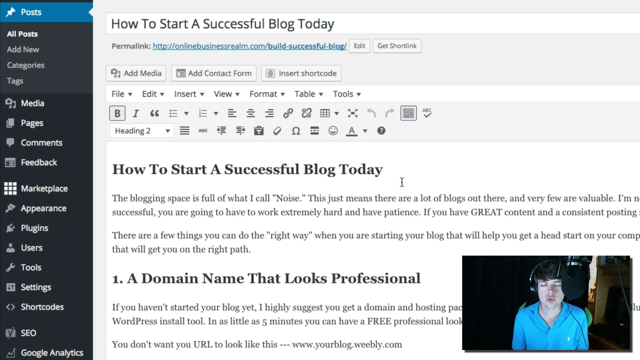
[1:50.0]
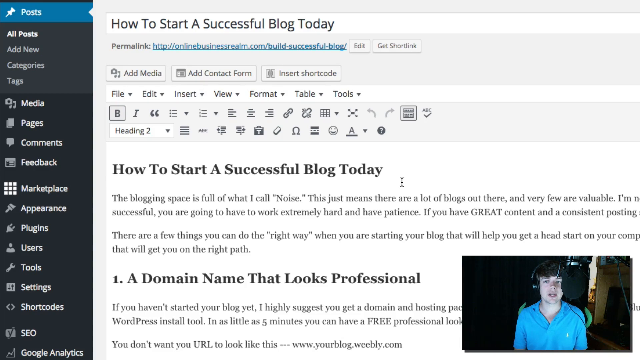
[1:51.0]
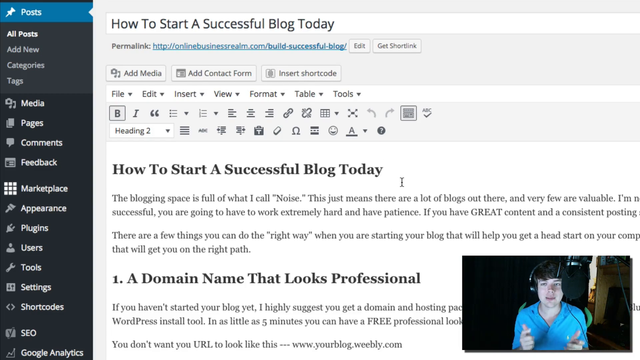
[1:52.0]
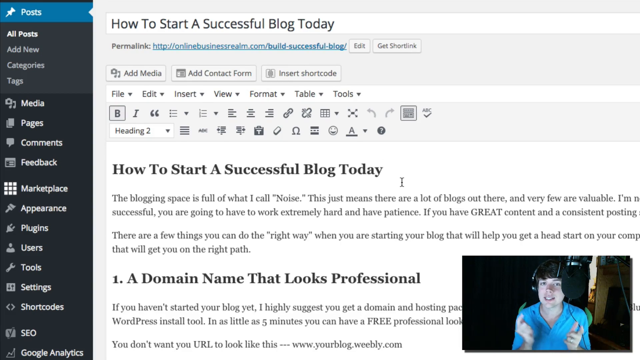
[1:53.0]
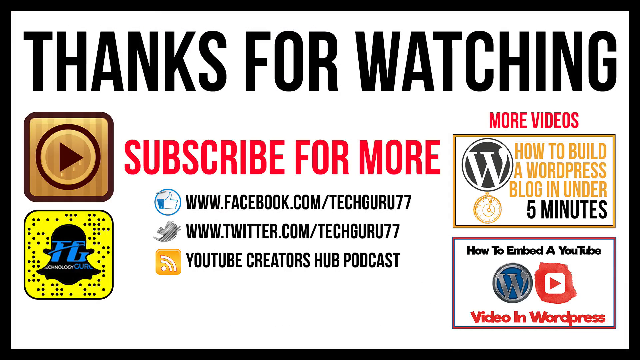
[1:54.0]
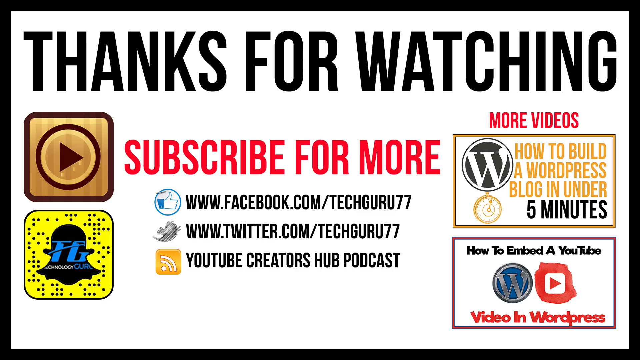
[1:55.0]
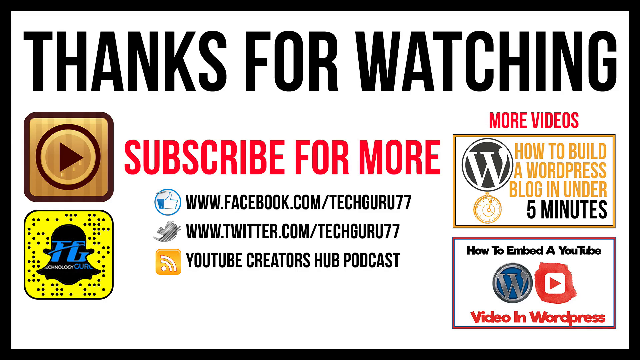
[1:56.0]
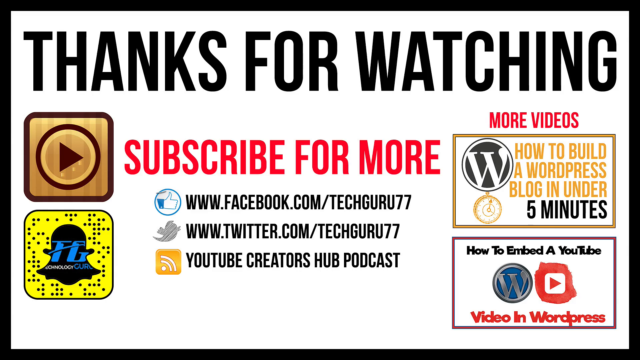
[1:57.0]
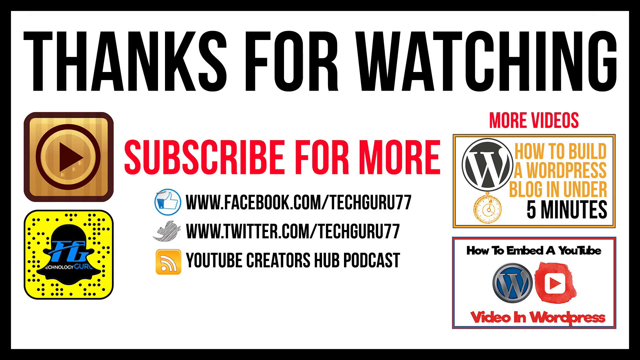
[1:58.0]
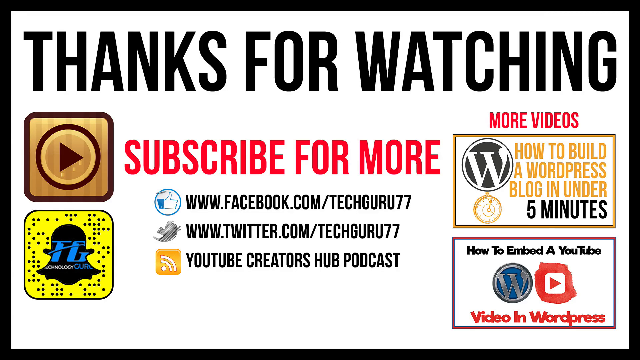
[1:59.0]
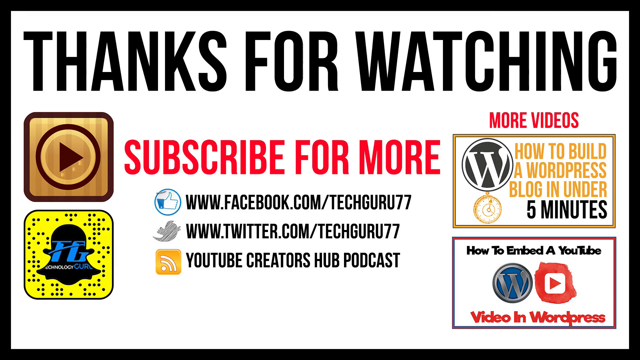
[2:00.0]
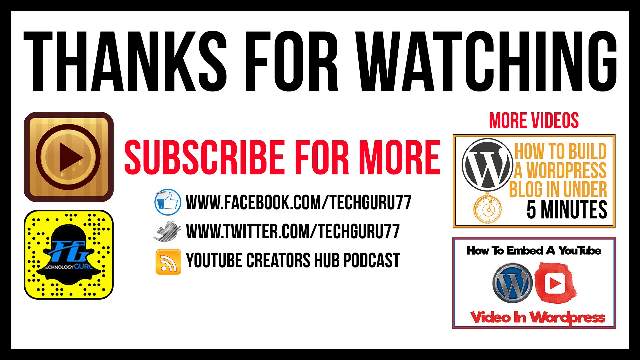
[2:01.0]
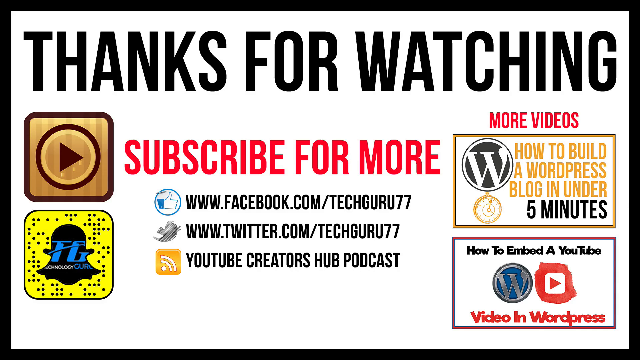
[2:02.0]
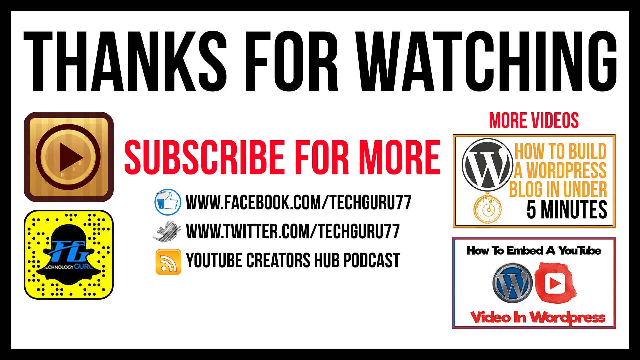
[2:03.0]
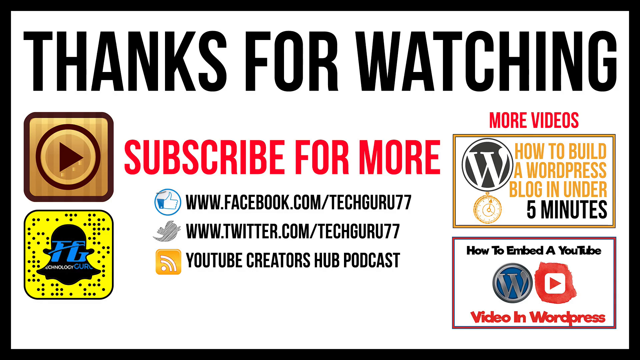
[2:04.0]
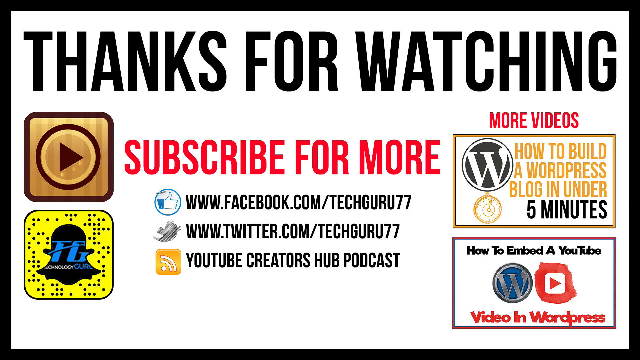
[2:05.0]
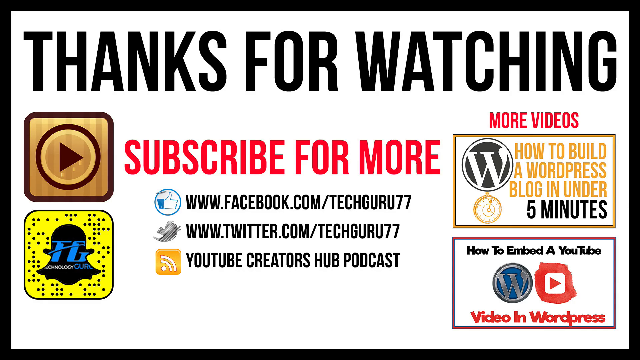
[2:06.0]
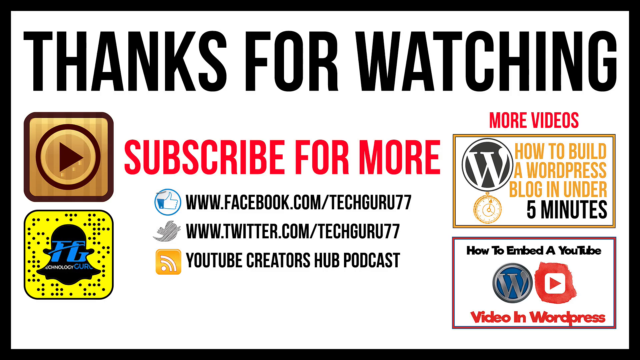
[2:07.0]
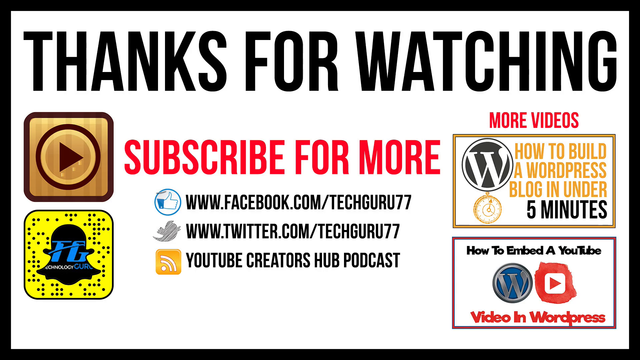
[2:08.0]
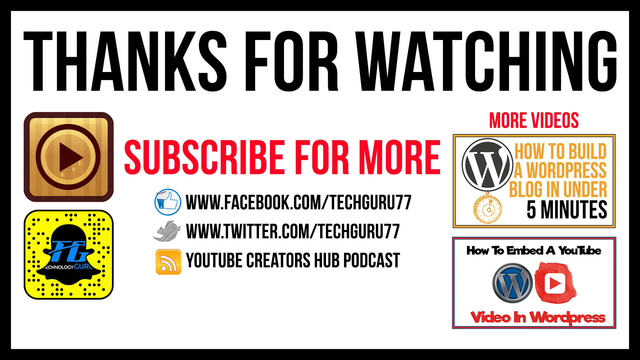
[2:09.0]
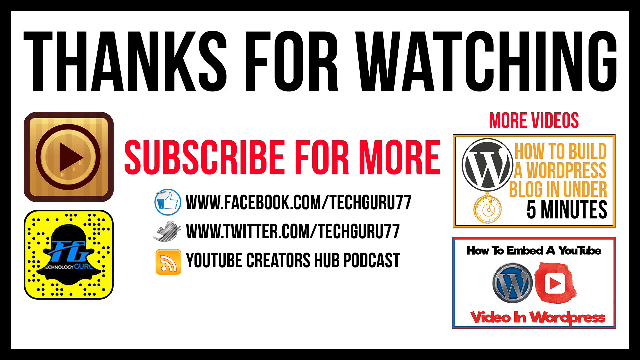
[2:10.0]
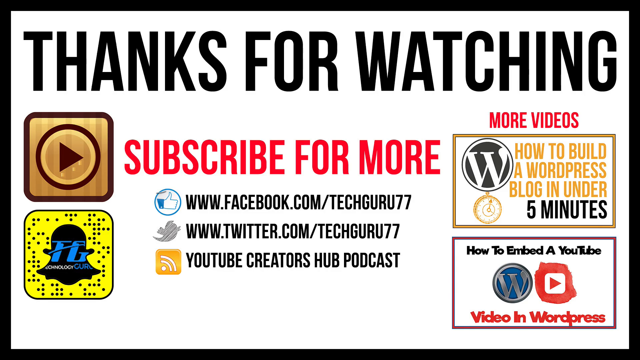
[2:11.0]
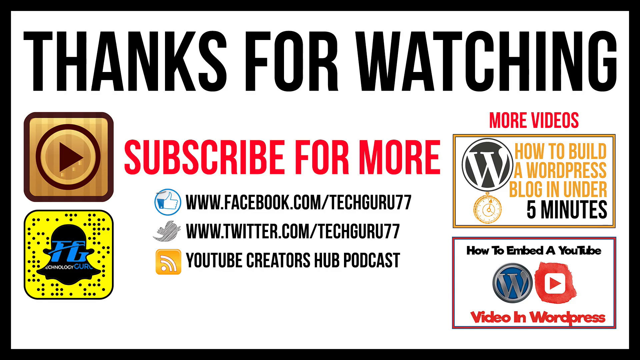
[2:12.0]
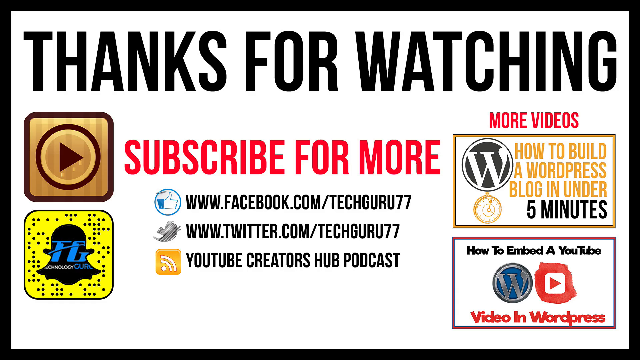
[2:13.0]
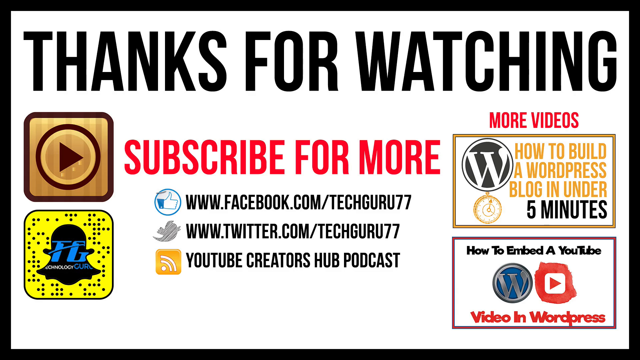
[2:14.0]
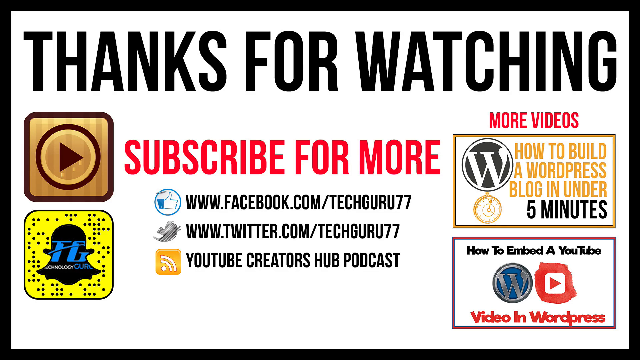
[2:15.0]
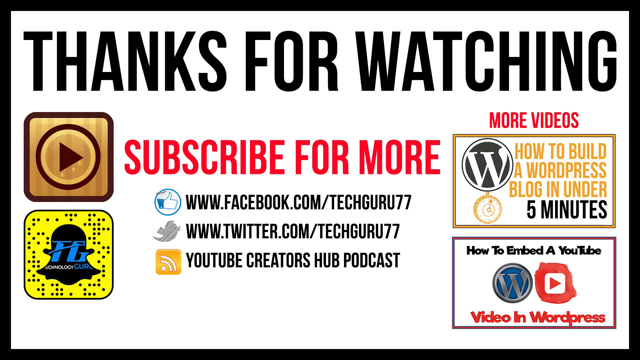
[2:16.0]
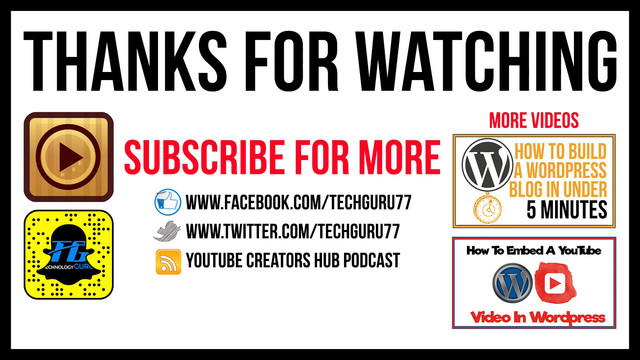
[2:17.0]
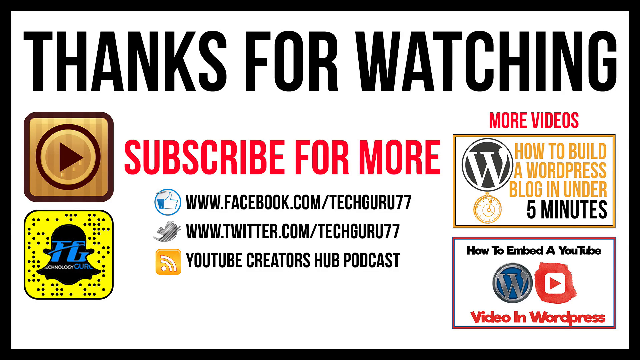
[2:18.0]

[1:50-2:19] The "How to Start a Successful Blog Today" page is shown, with the permalink onlinebusinessrealm.com right under the title. On the left, "post" is highlighted, with "all posts", "add new" and "categories" down the side. The main screen shows the title with the first instruction, "a domain name that looks professional", beneath it. In the bottom right corner, a young man in a blue polo shirt and over-the-ear headphones speaks into a boom mic; it looks like probably a podcast or an instructional video. He seems pretty excited, and he pops an ad up on the screen reading "thanks for watching, subscribe for more videos", with links for "TechGuru77 at Facebook.com", "TechGuru77 at Twitter.com" and "YouTube Creators Hub Podcast", plus "More videos": "How to Build a WordPress Blog in Under 5 Minutes" and "How to Embed a YouTube Video in WordPress", and "TechGuru77, www.techguru77.com". The ad stays on the screen for the remainder of the video.